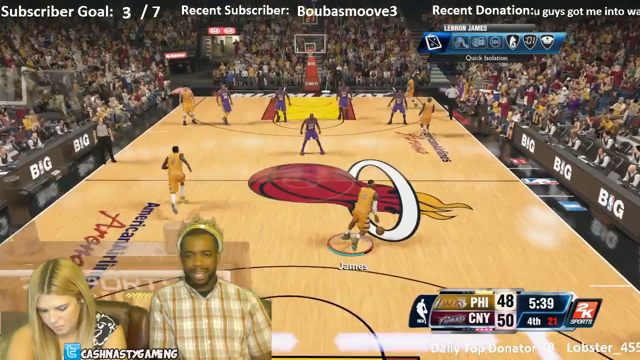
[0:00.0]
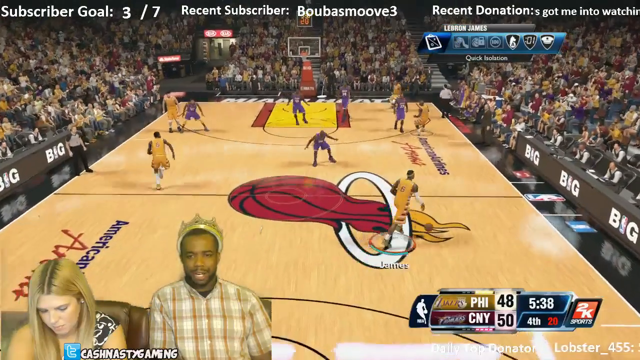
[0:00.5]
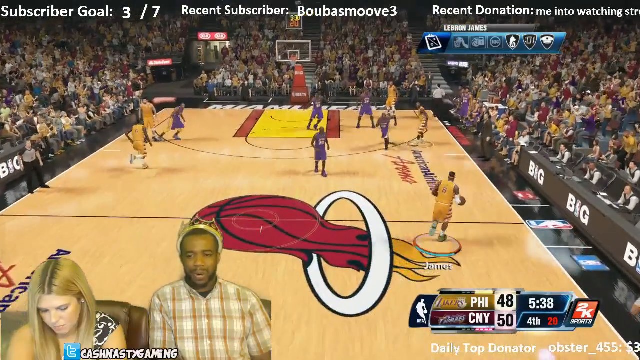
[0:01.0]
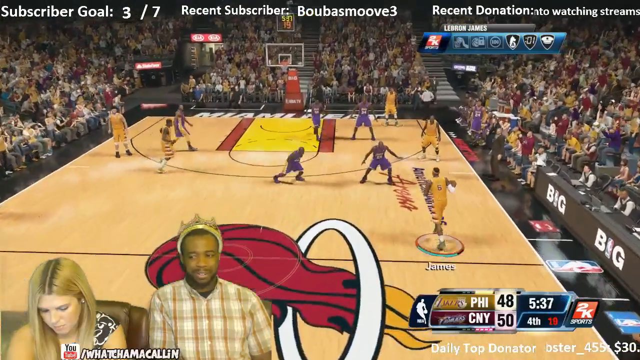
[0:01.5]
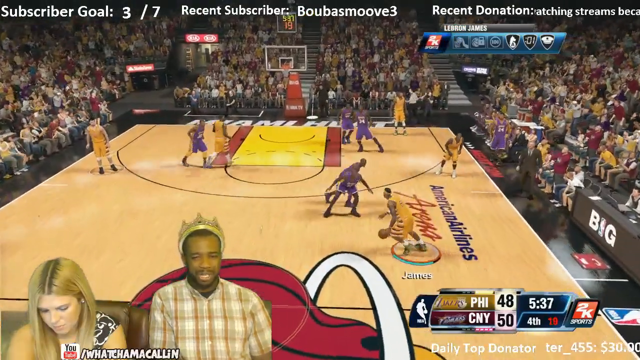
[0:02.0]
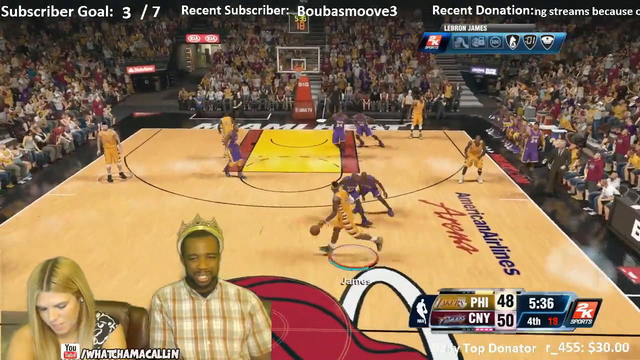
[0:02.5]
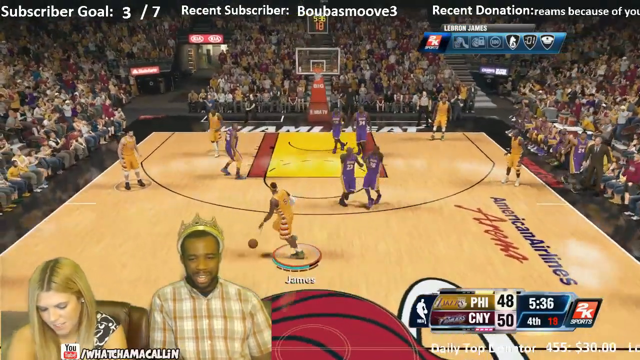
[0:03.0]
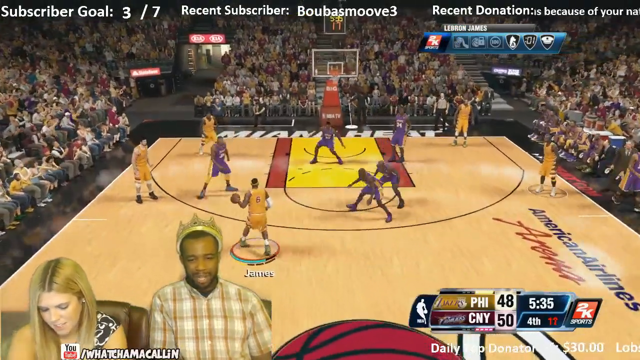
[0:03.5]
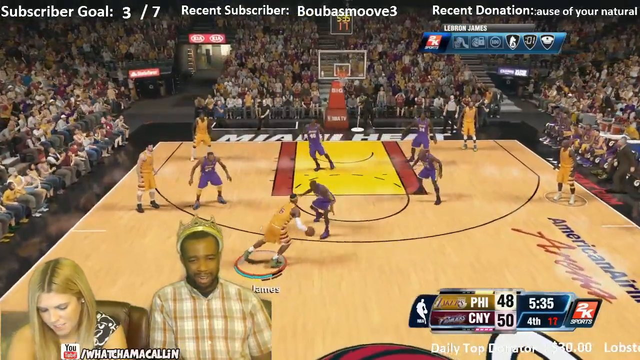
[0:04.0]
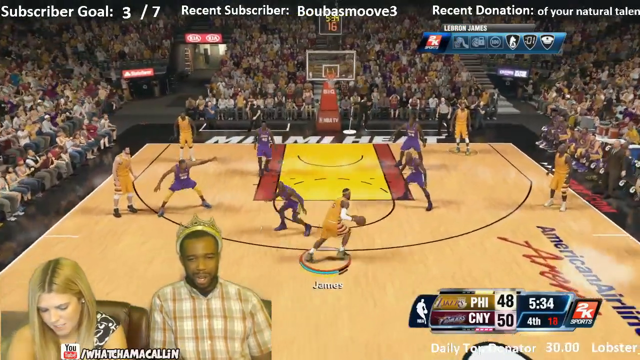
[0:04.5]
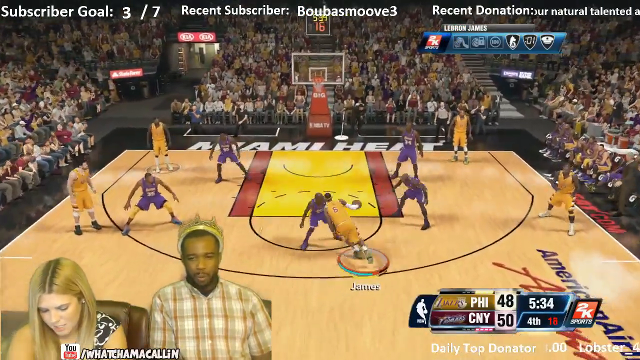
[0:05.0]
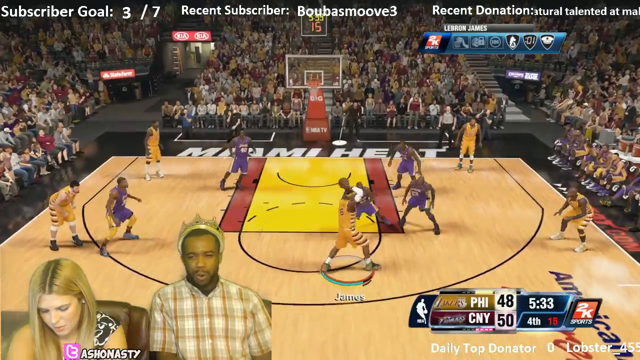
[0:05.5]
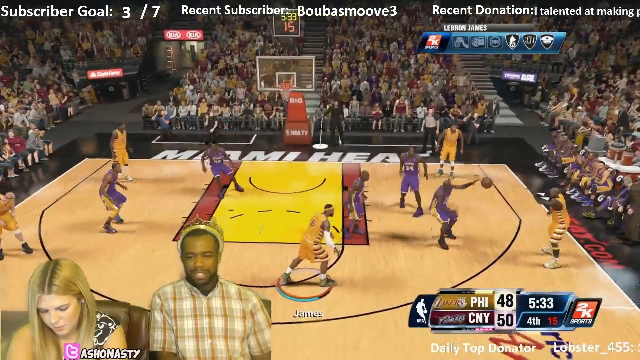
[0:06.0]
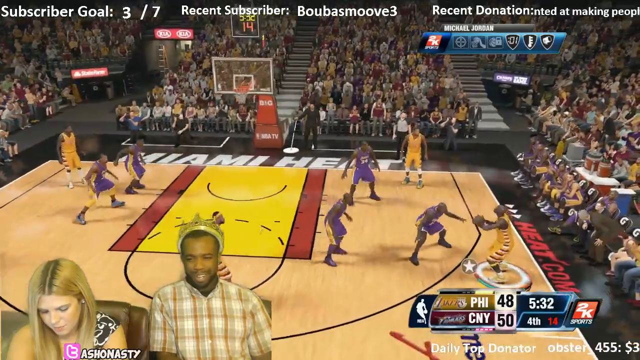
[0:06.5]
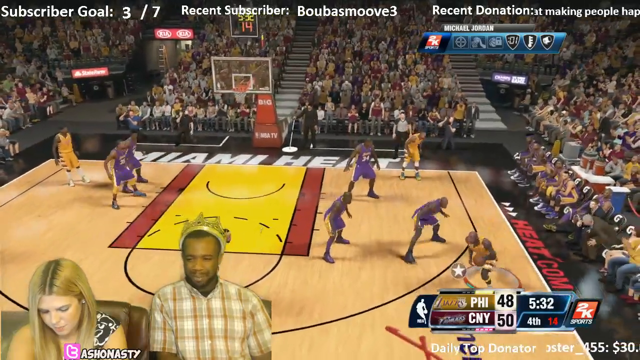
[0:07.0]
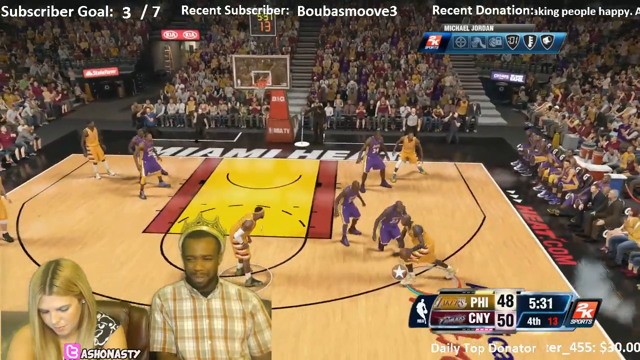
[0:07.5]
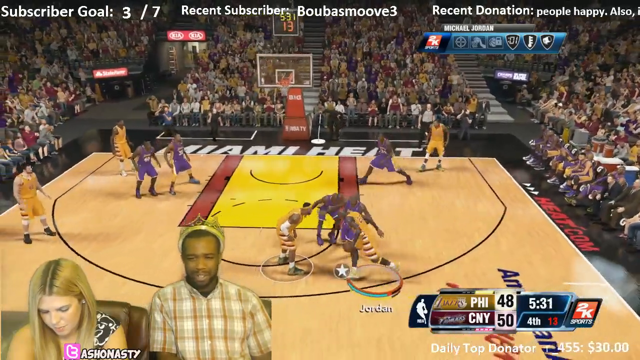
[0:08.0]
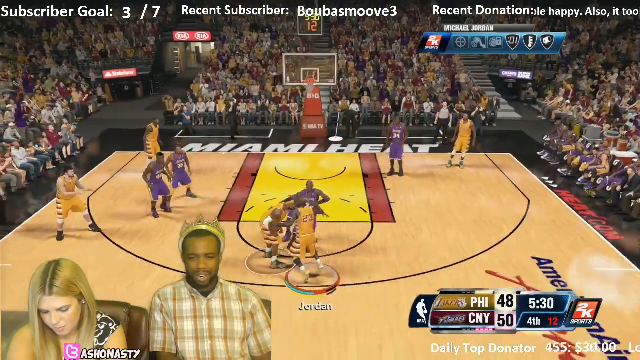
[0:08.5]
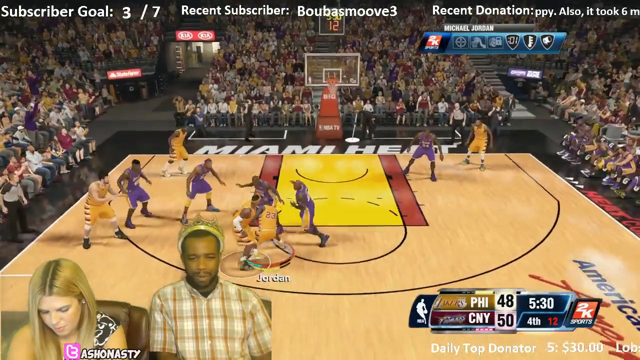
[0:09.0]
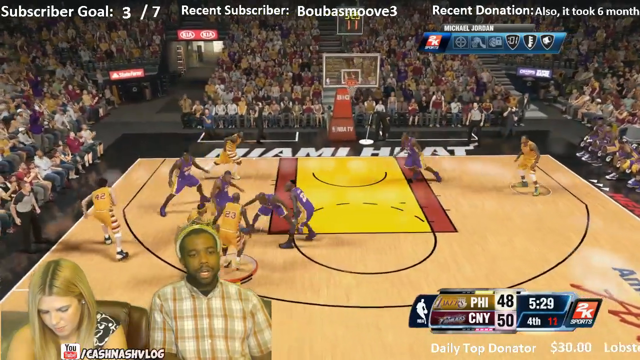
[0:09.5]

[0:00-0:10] A basketball video game appears to be played, shown from the player's point of view. In the bottom left there seem to be two people: a woman sitting on the left and a man sitting on the right. The man on the right seems to have a crown above his head. The player he controls is named James. He moves the basketball from the right of the screen to the left, dribbles, and passes to another player named Jordan on the right. There are two teams, one wearing yellow and the other wearing blue.